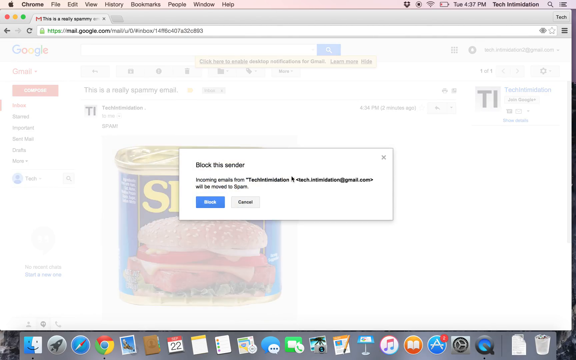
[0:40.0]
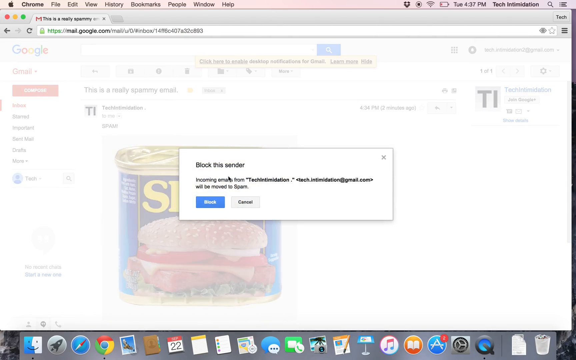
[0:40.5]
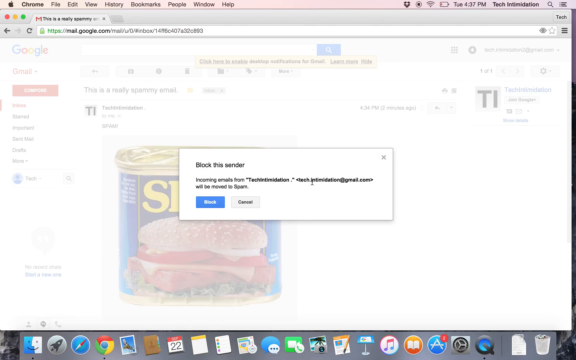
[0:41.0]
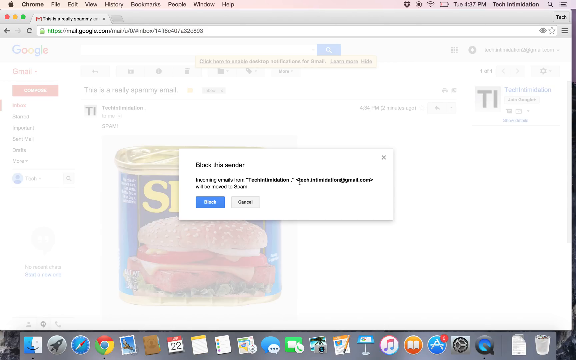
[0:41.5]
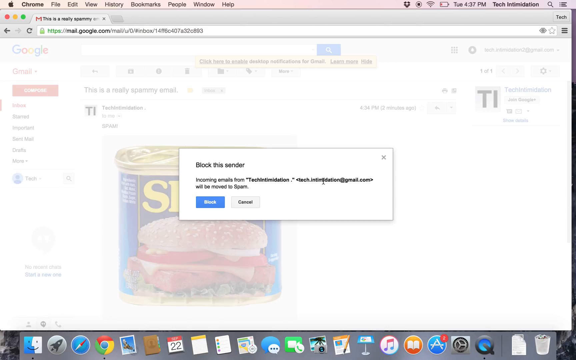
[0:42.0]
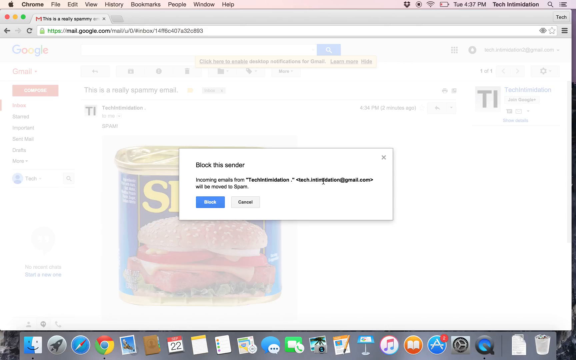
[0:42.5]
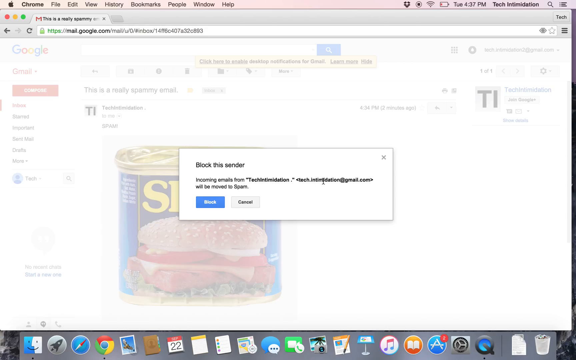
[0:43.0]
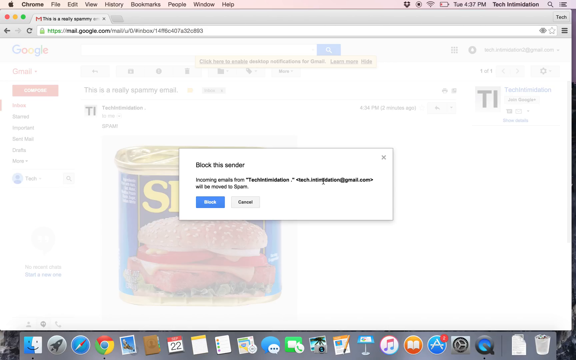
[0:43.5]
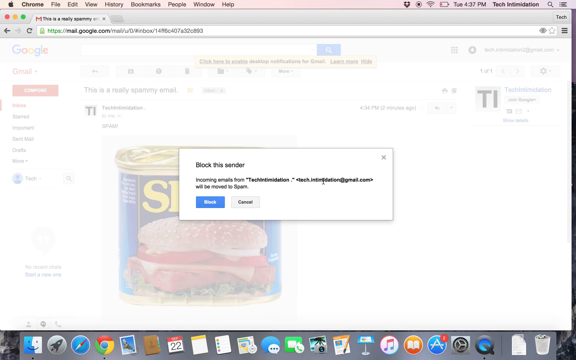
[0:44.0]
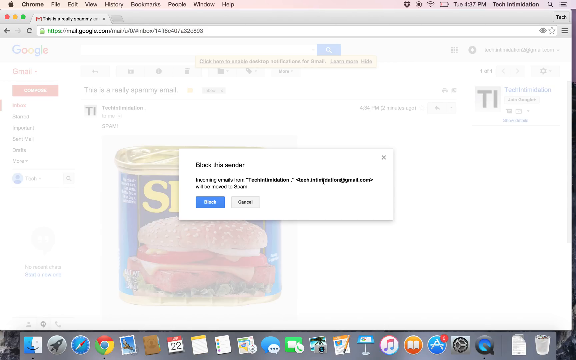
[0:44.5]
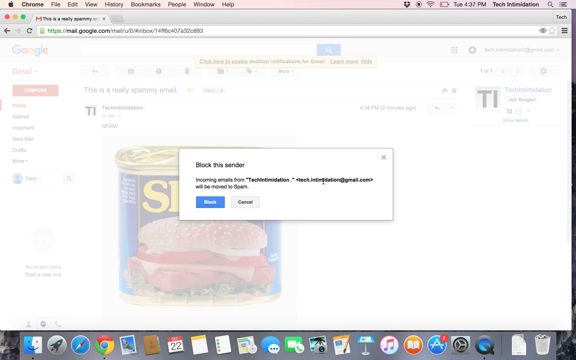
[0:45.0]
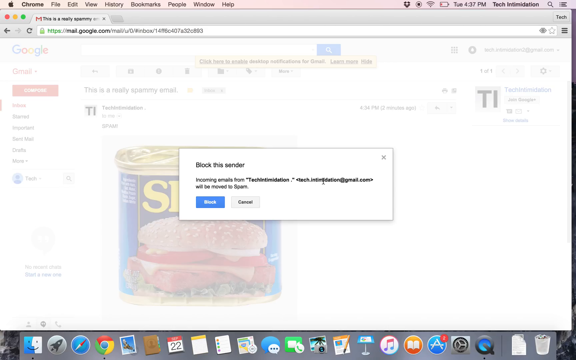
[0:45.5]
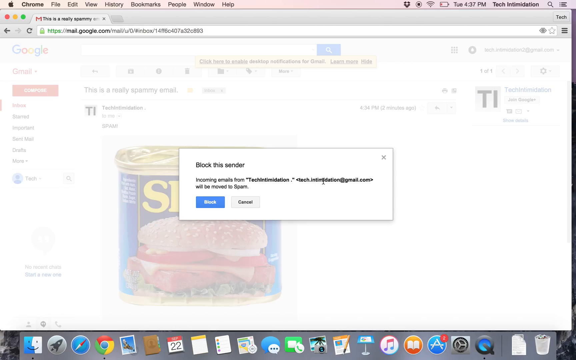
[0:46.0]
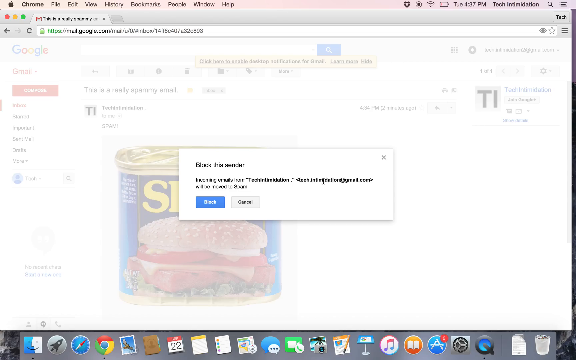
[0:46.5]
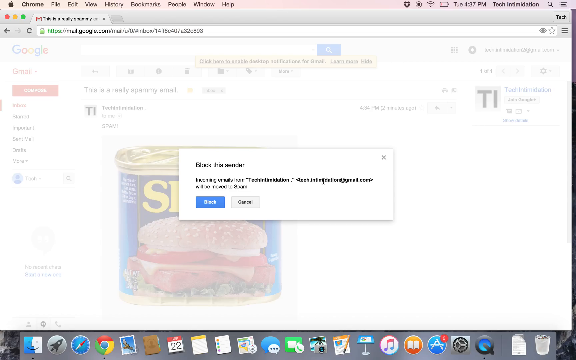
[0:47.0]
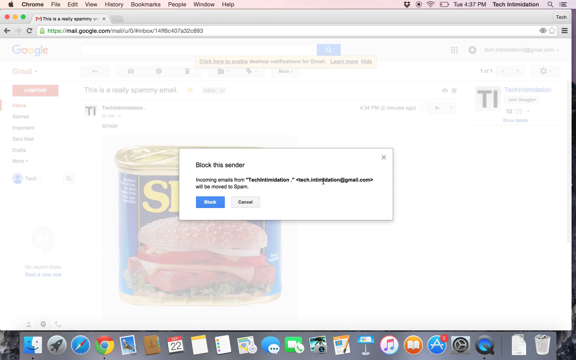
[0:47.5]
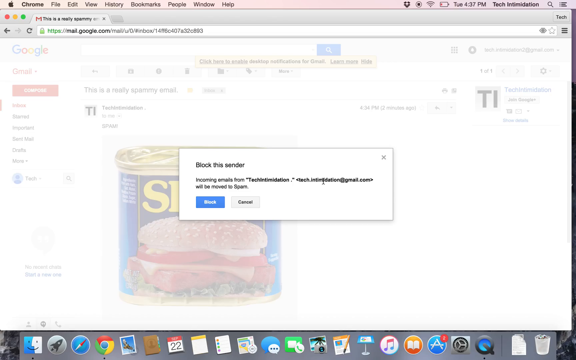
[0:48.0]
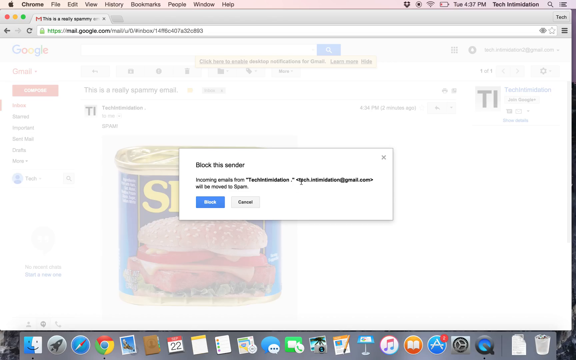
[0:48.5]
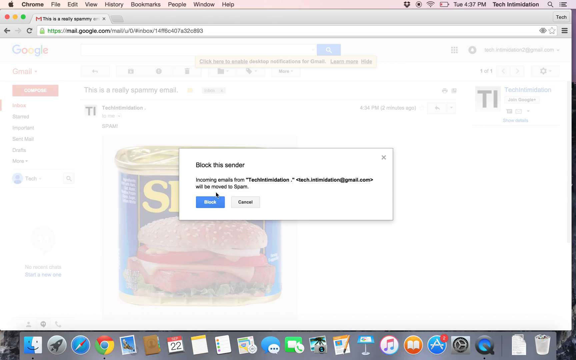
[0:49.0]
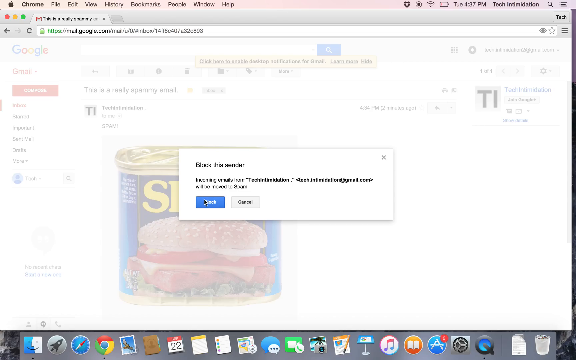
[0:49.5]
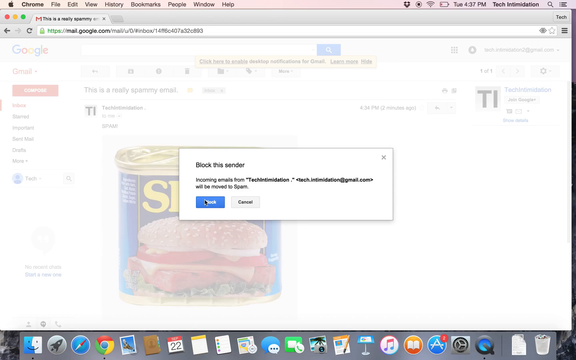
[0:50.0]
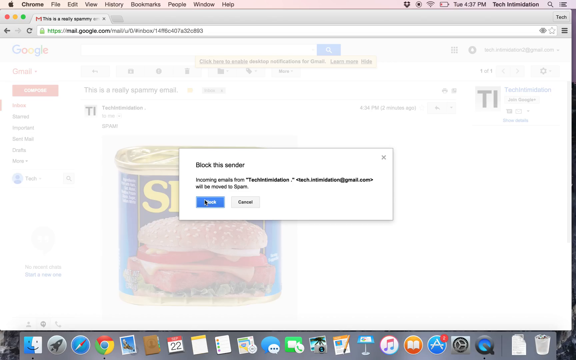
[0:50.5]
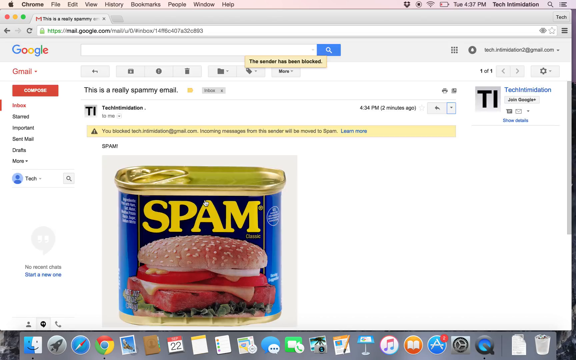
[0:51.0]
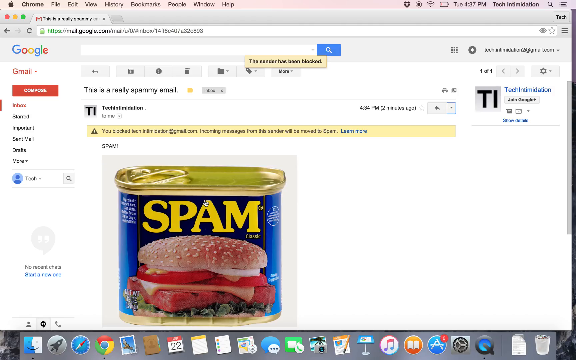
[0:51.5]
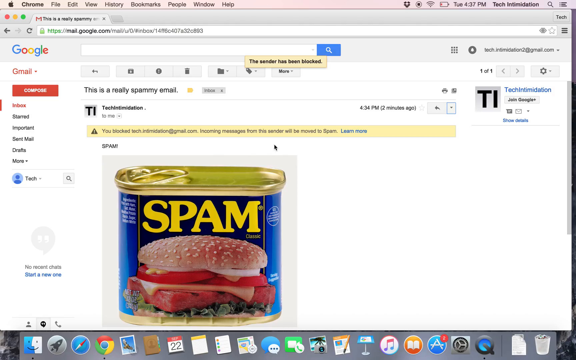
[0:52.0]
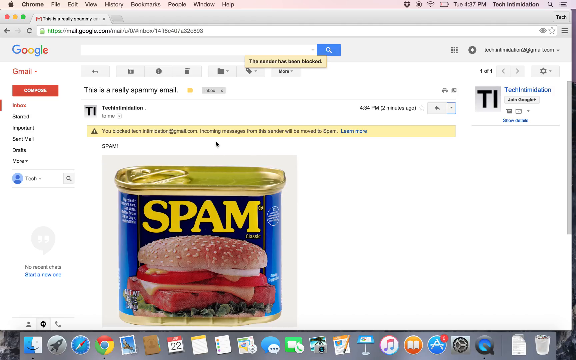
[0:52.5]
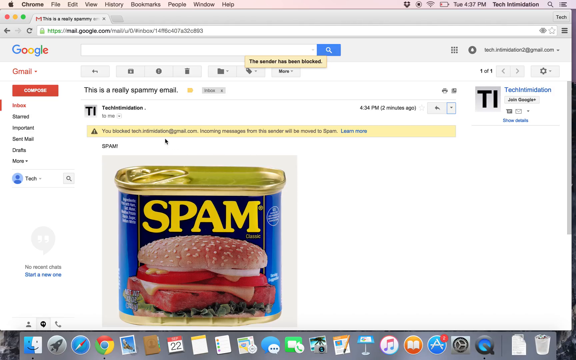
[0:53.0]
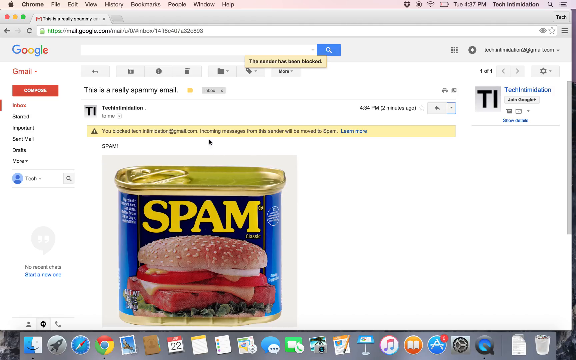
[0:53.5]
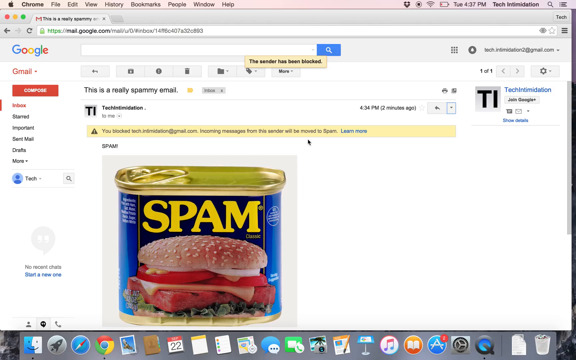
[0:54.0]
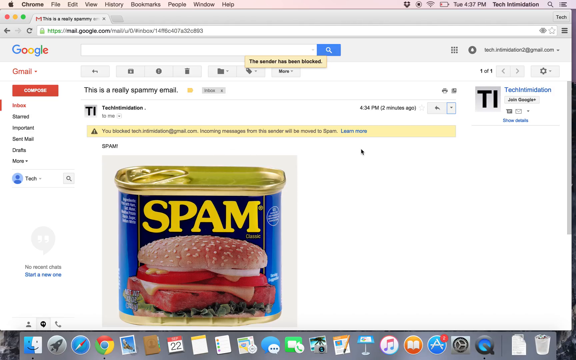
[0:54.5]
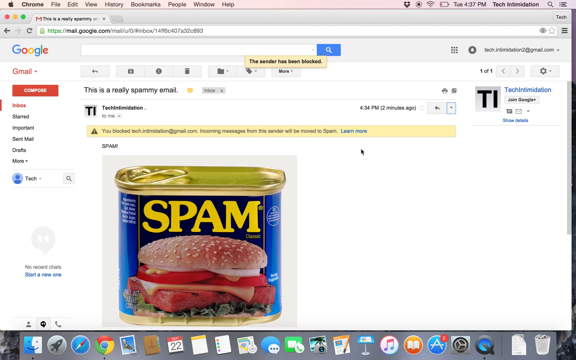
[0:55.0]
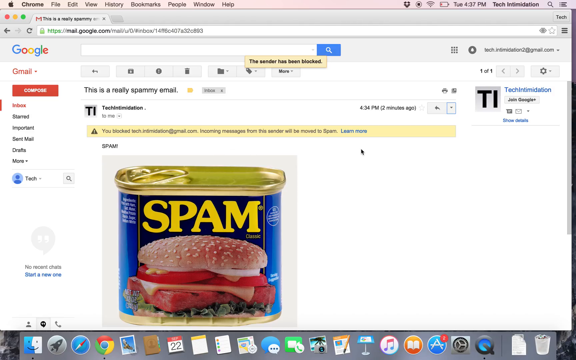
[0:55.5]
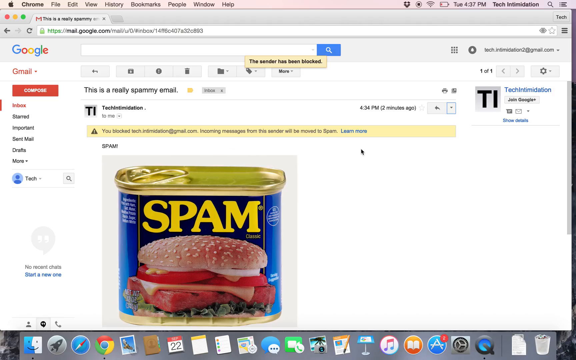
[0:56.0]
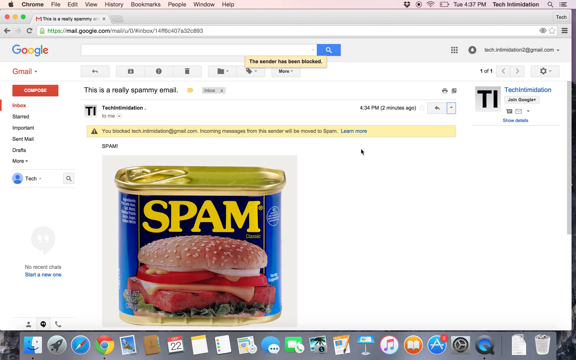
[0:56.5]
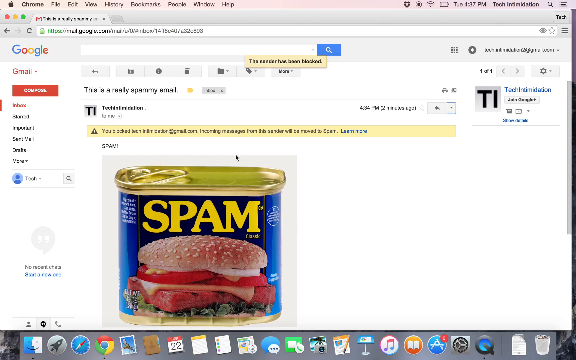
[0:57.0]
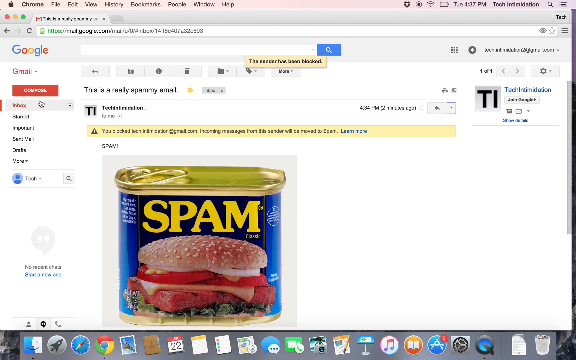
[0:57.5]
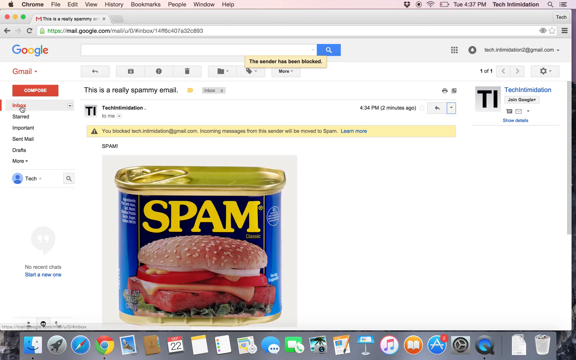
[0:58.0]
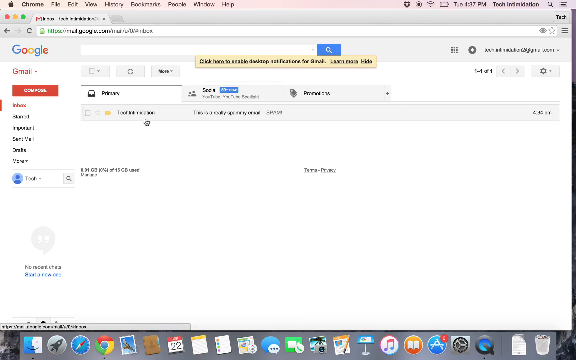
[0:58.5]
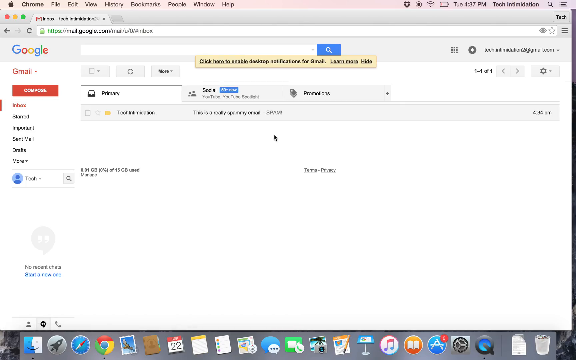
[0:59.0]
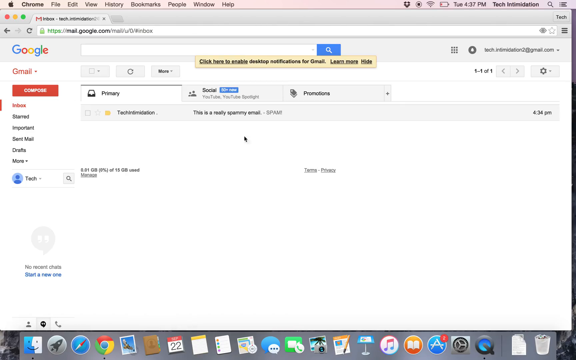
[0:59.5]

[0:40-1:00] The screen shows how to block a sender from sending messages. After the sender is successfully blocked, a message appears showing that the sender has been blocked. The mouse then goes back to the inbox, which is empty. There is a Google search bar where words can be typed in, and below Gmail there is apparently a section for Inbox, Sent Mail and Drafts. A tin-like container named spam is shown, with a burger kind of chicken on it, indicating what the spam content looks like. At the top right corner of the screen is a menu reading Chrome, File, Edit, View, History, Bookmarks, People, Window and Help.